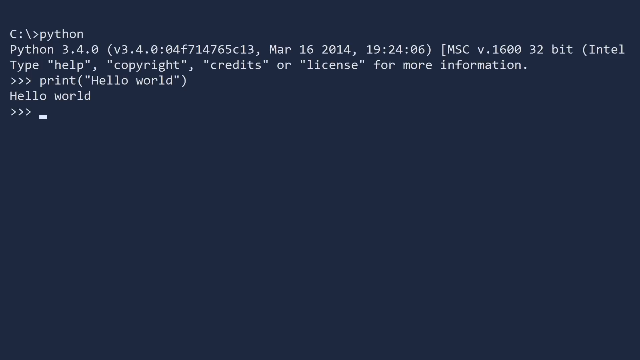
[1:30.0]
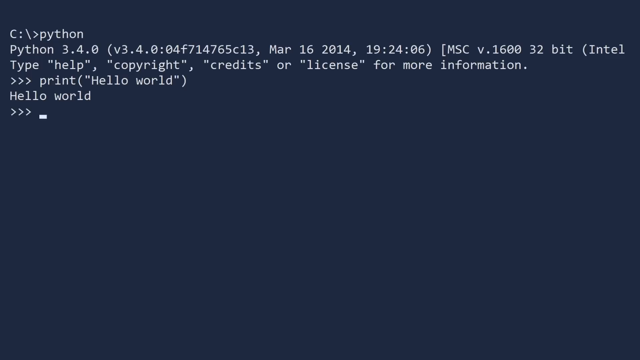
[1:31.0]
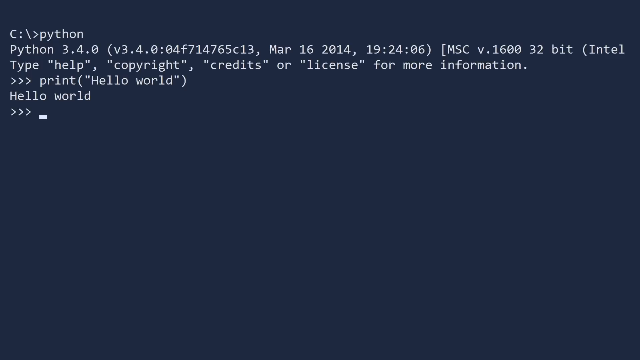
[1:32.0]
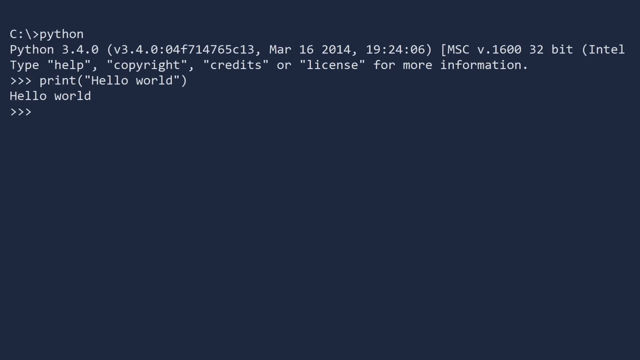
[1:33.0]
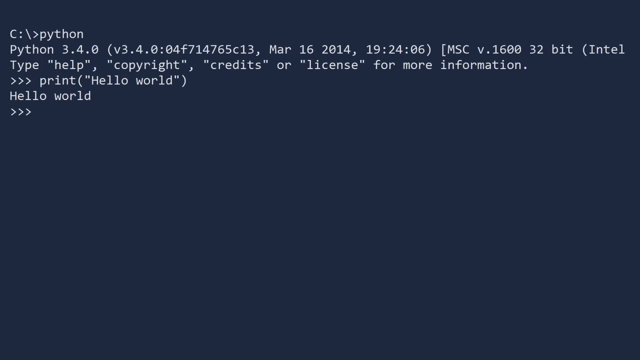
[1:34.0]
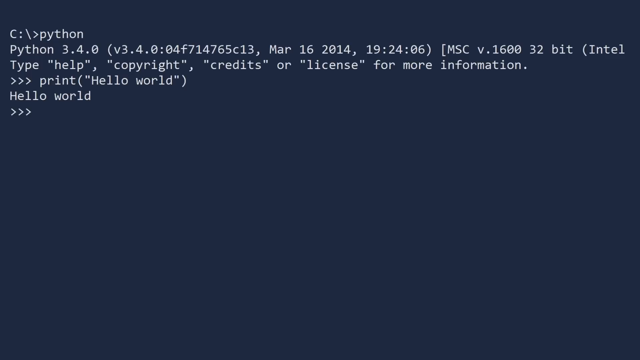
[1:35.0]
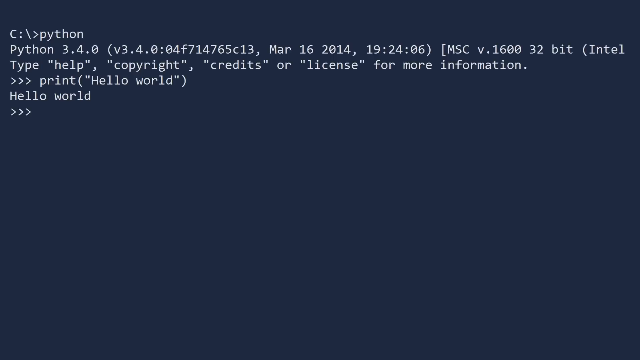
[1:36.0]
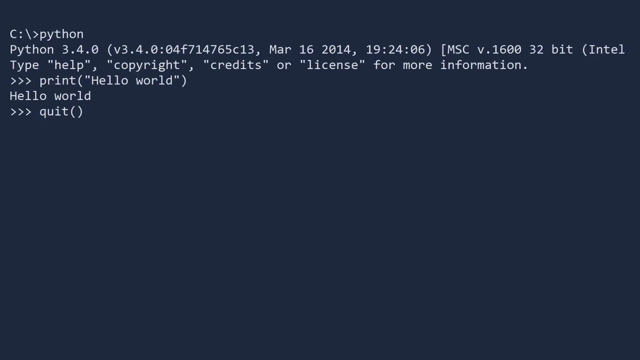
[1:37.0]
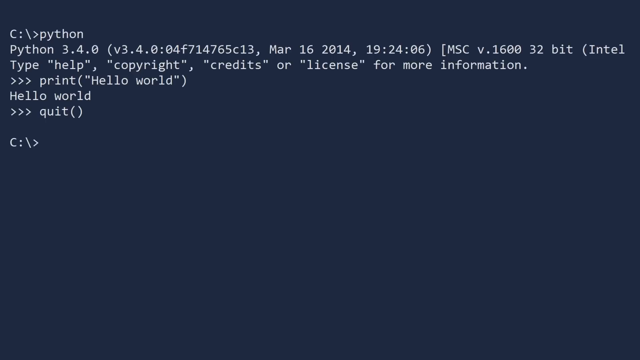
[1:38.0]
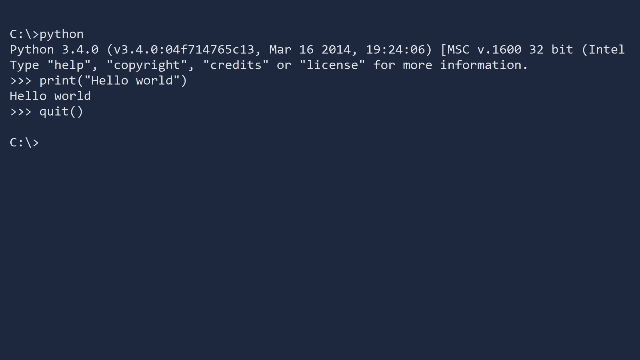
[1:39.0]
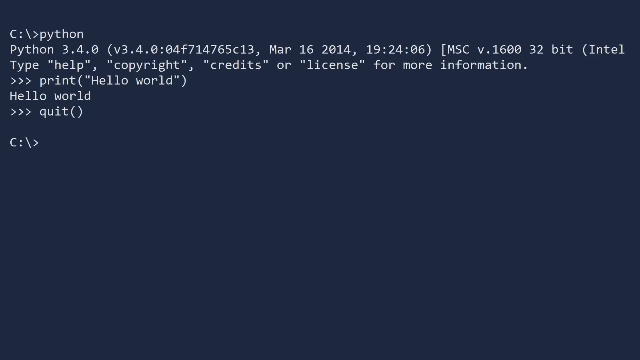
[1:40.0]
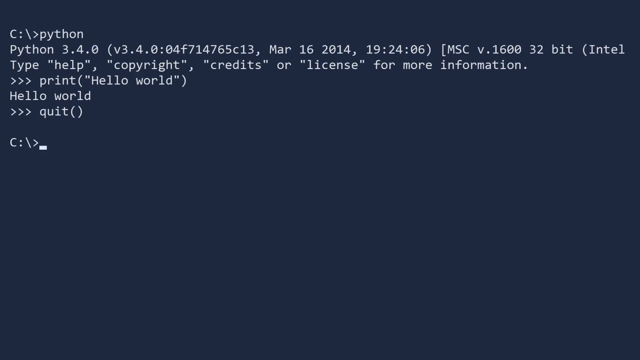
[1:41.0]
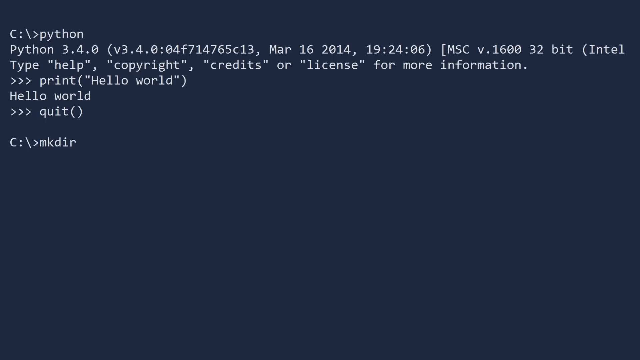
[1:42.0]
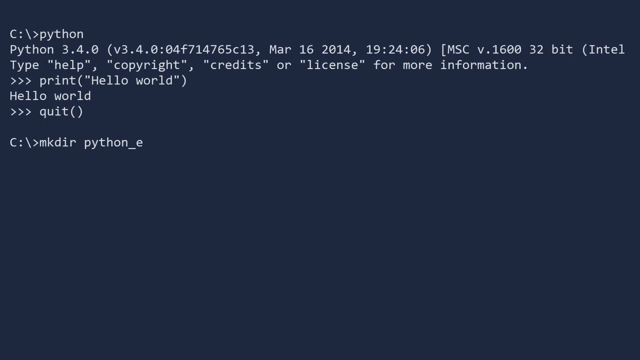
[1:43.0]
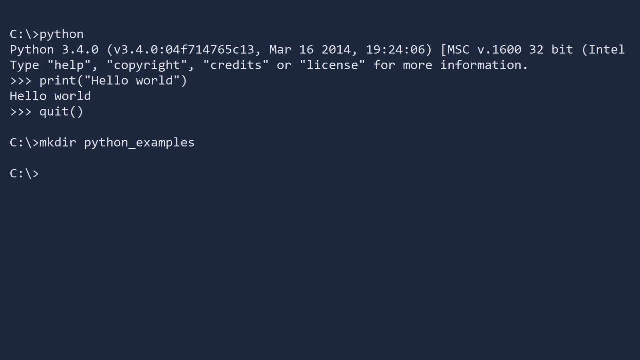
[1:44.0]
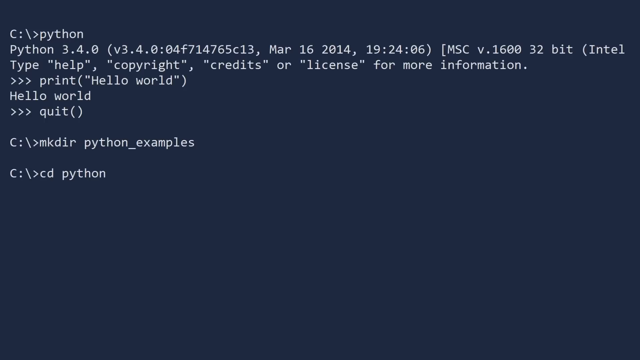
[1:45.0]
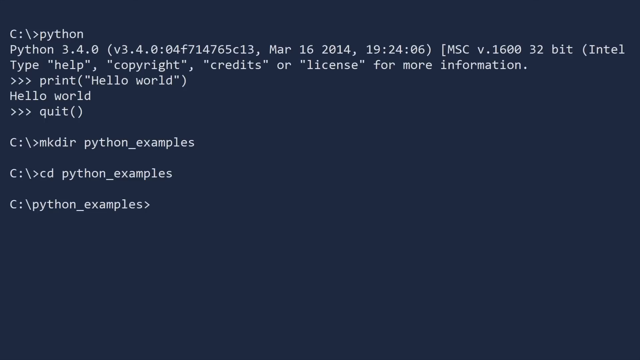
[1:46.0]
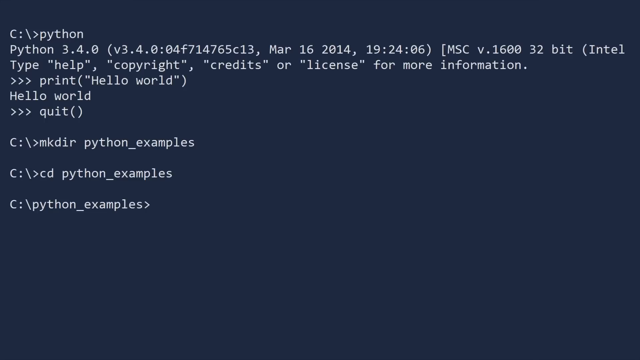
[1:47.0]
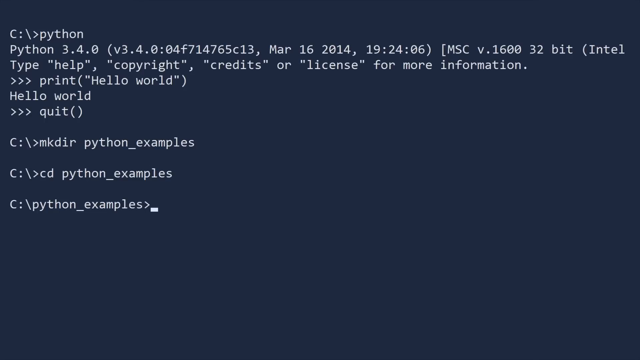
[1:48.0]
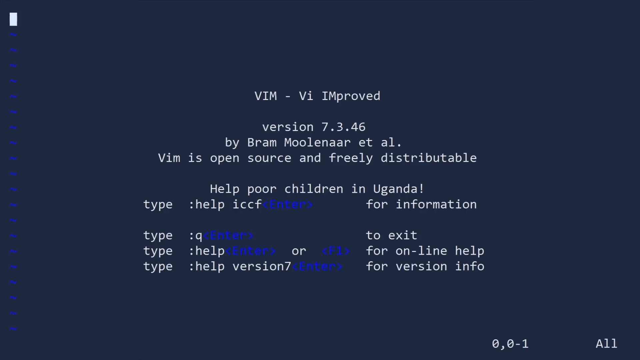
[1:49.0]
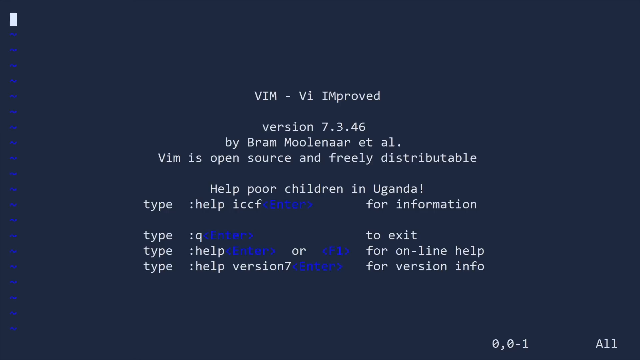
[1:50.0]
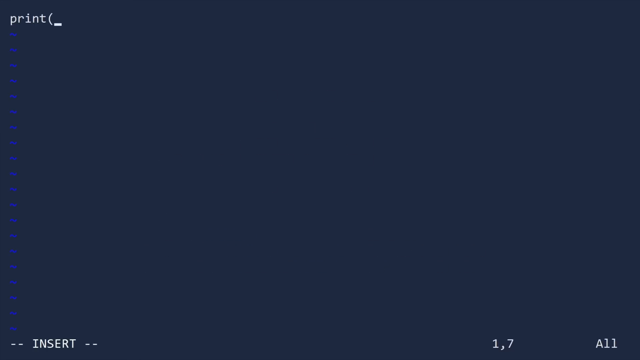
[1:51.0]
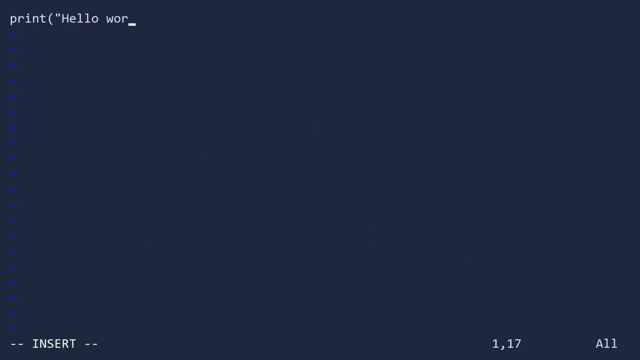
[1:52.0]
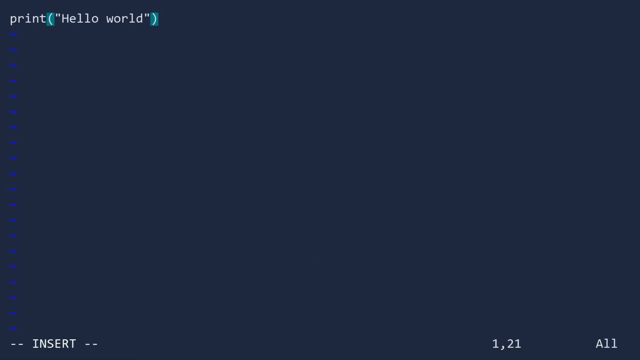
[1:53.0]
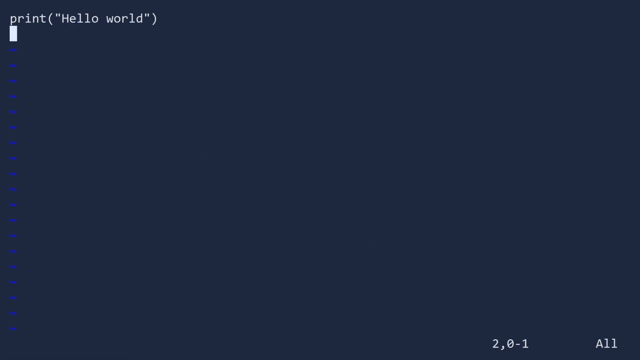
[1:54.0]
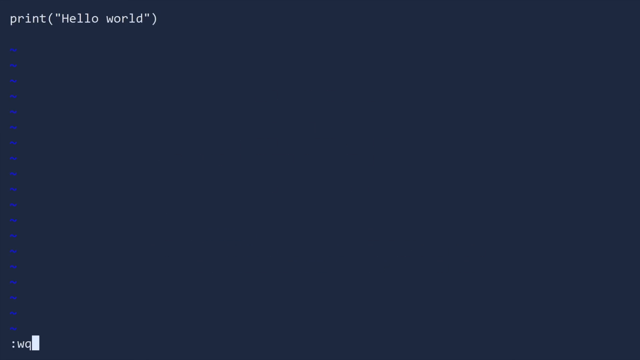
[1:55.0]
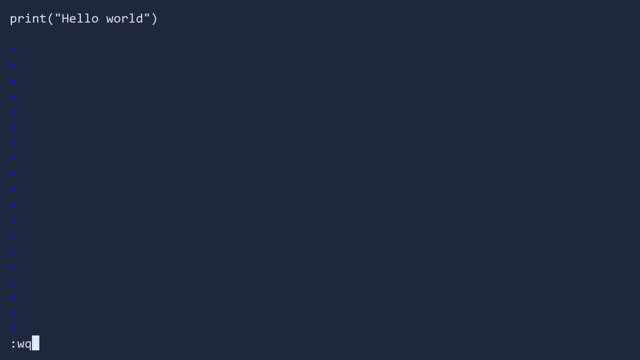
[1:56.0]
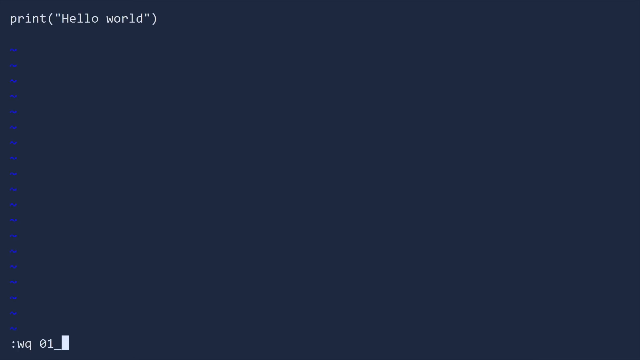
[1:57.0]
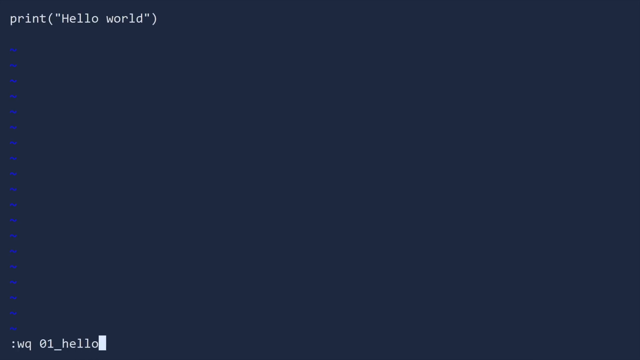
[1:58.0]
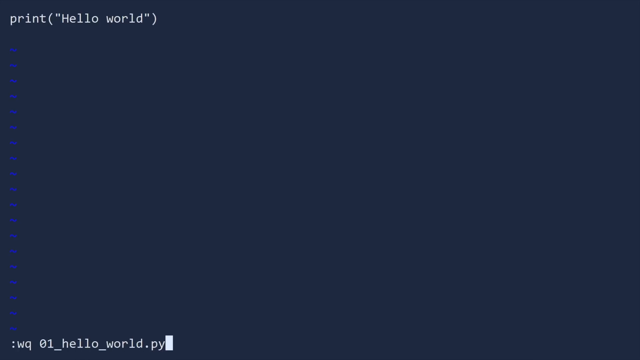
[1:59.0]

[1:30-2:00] The terminal, with a dark blue background and white text, shows commands that have been run: first "python", followed by the Python version and other information, then a line reading print hello world with "hello world" on the line below. The user types "quit()", and a new line reading "C:\" followed by a forward arrow appears. He types "mkdir python_examples", then on the line below "cd python_examples". A line appears below reading "C:\python_examples" followed by a forward arrow. He types "vim", and a new screen pops up with a similar dark blue background and text in the middle reading "vim-vimproved", along with more information about vim and some example commands. He types print hello world again. At the bottom of the page he types "wq- 01__hello__world.py".